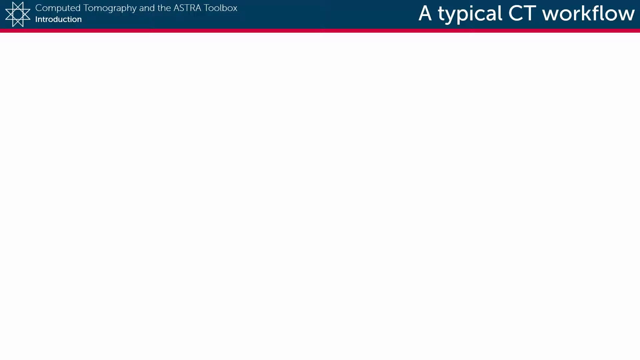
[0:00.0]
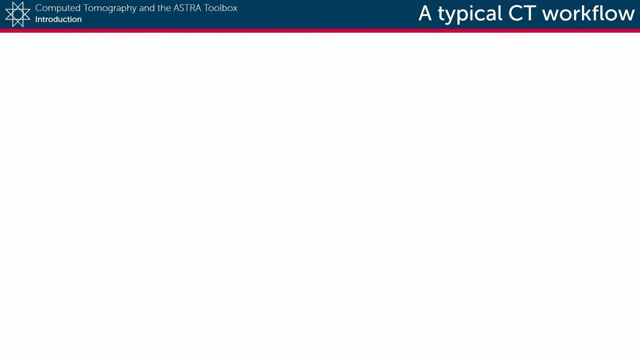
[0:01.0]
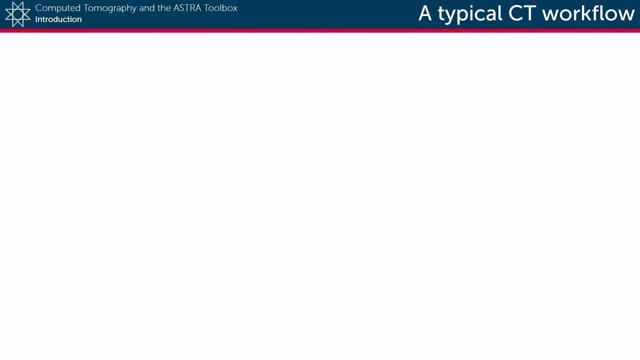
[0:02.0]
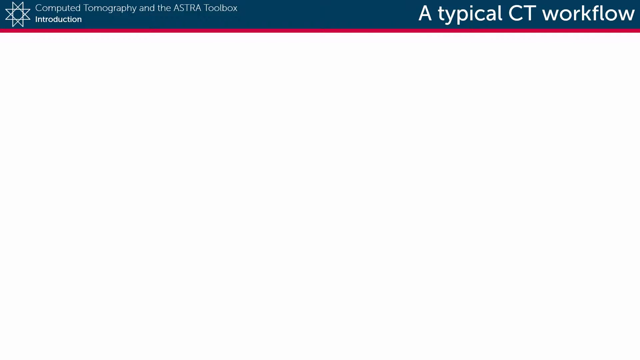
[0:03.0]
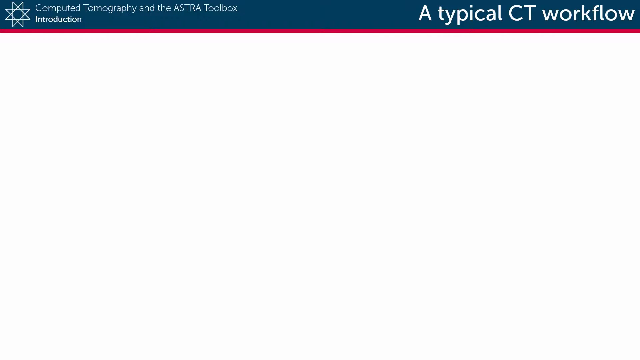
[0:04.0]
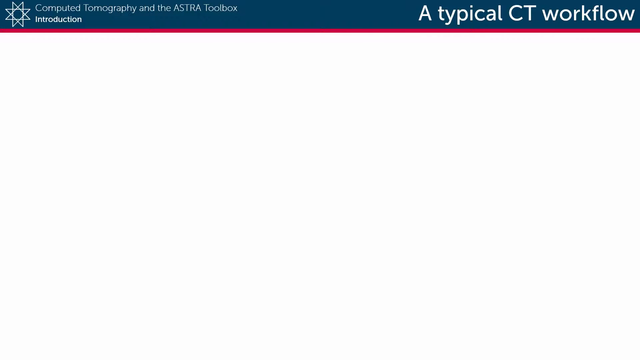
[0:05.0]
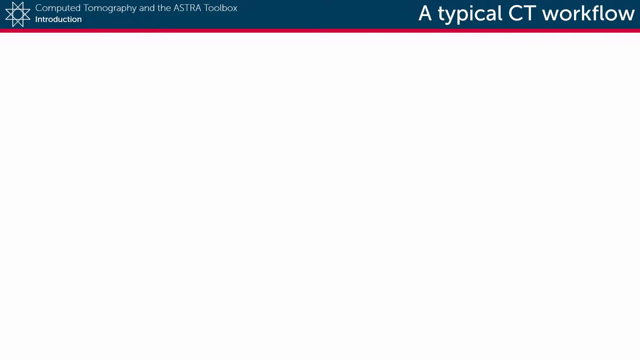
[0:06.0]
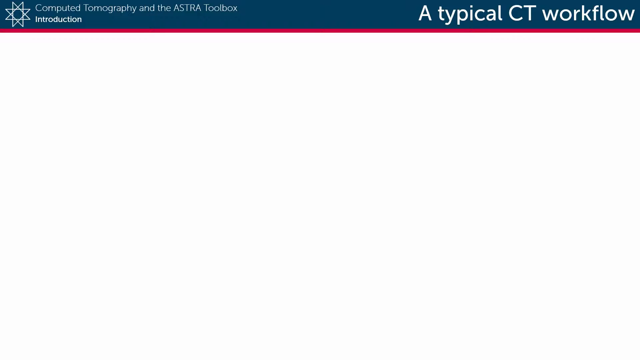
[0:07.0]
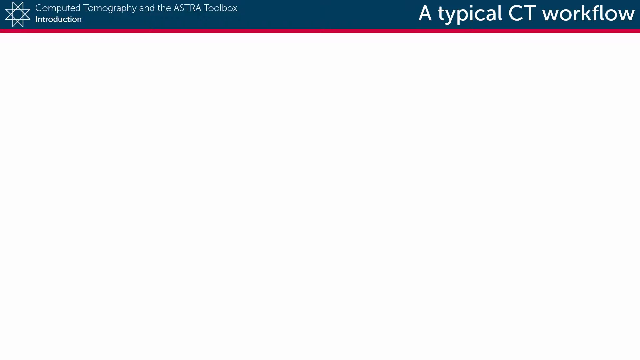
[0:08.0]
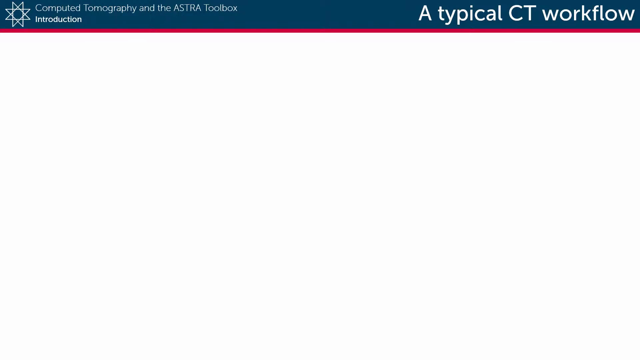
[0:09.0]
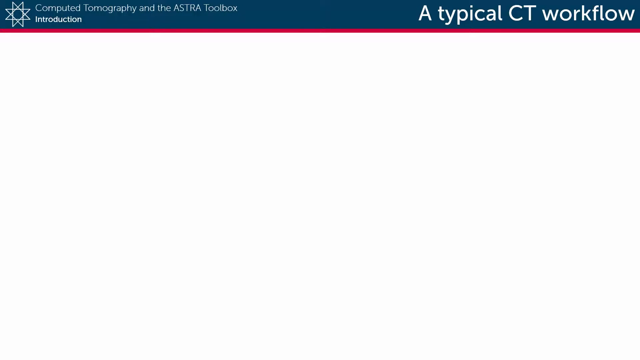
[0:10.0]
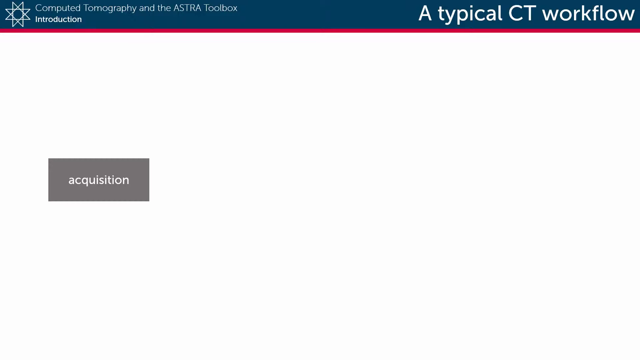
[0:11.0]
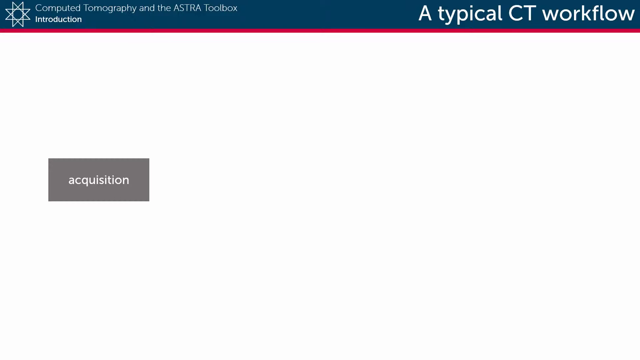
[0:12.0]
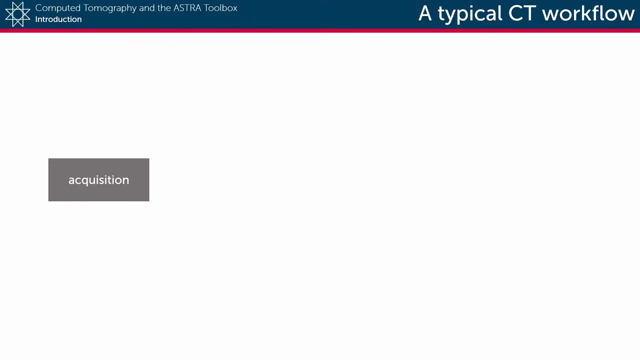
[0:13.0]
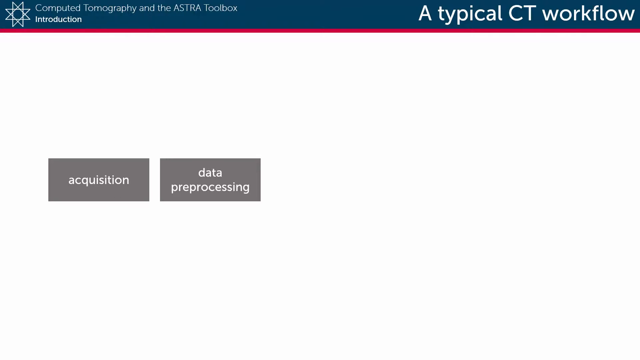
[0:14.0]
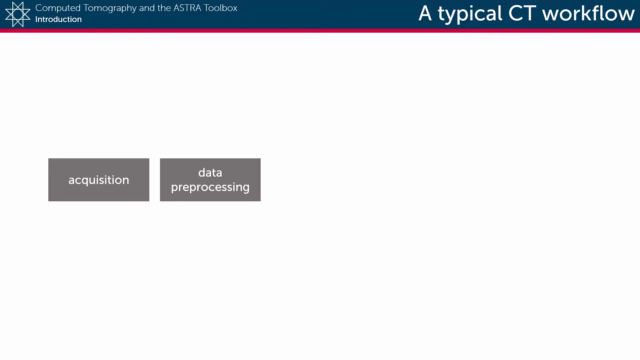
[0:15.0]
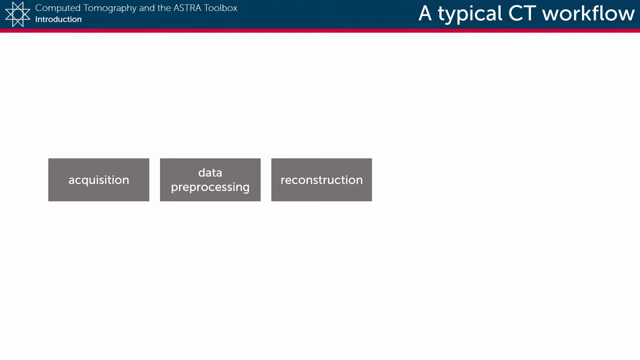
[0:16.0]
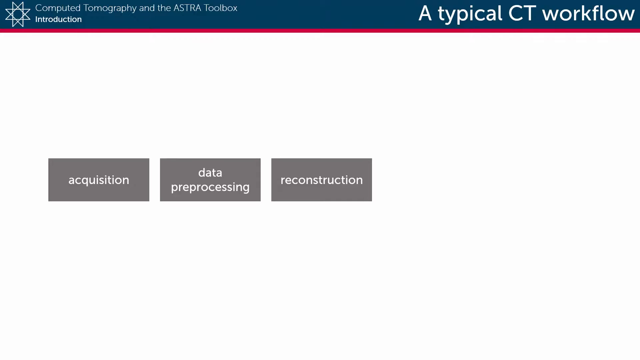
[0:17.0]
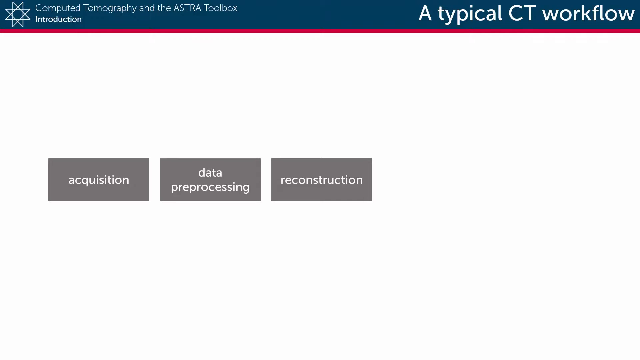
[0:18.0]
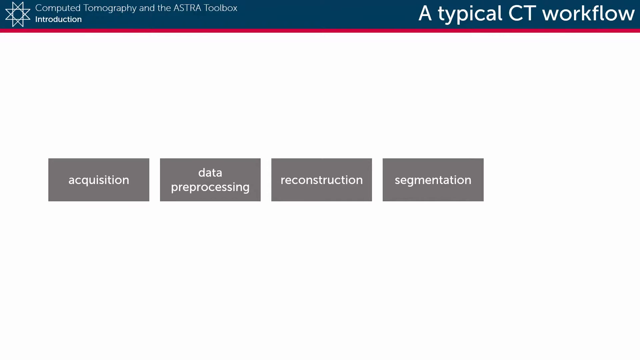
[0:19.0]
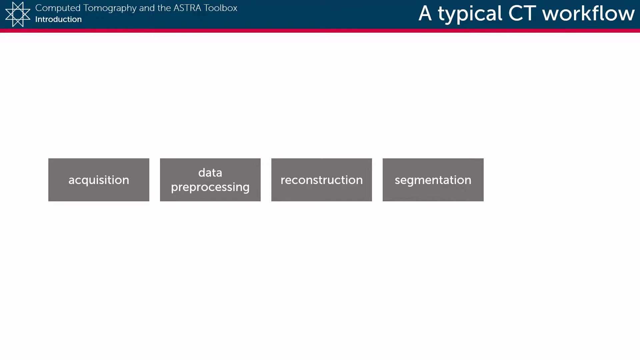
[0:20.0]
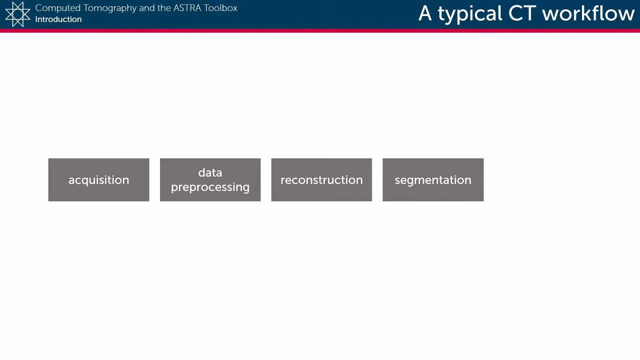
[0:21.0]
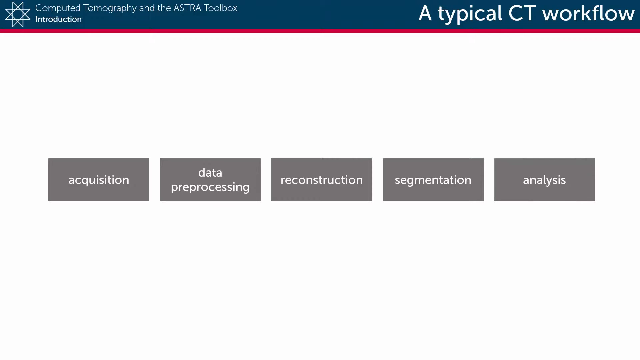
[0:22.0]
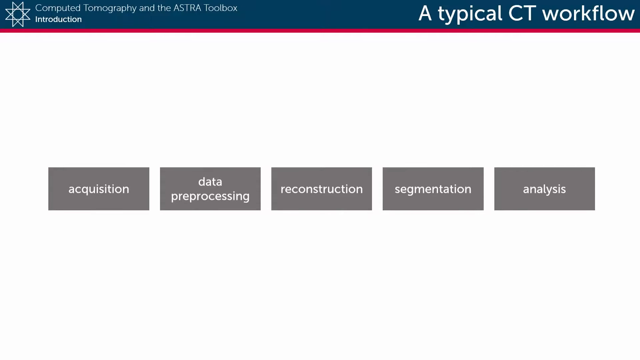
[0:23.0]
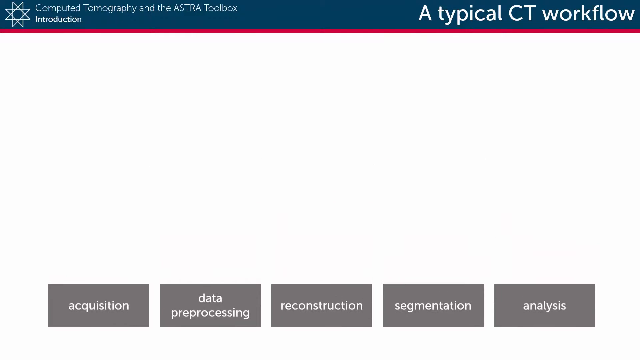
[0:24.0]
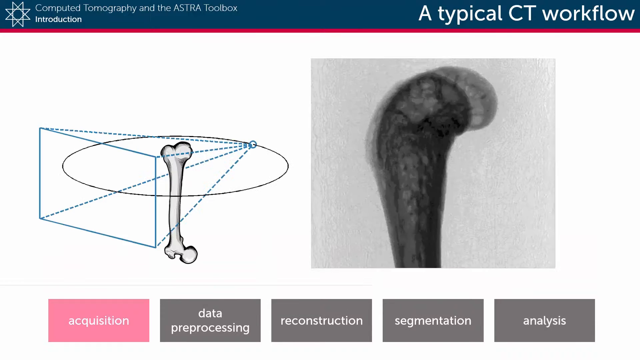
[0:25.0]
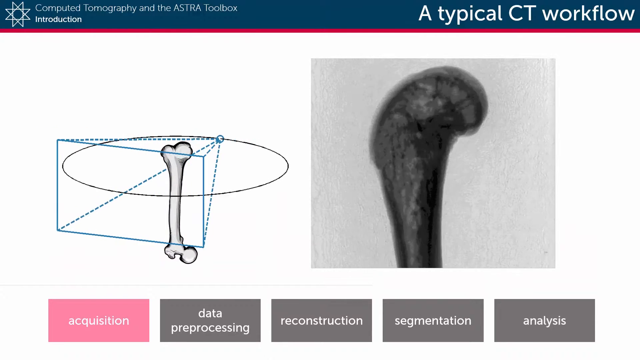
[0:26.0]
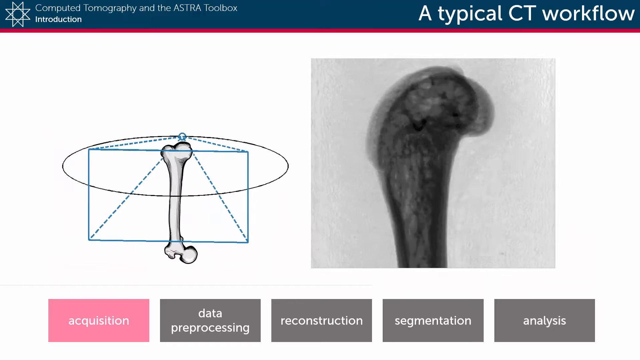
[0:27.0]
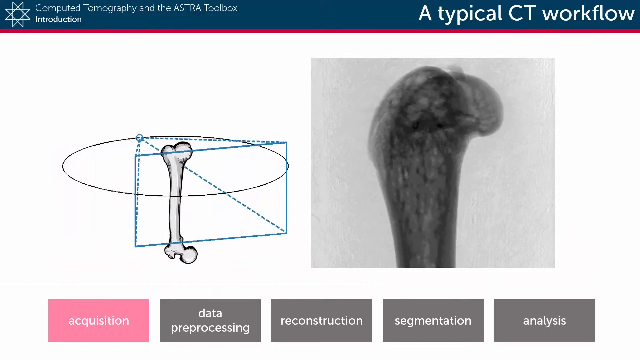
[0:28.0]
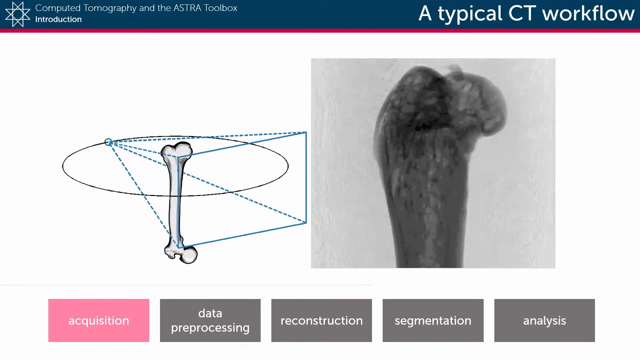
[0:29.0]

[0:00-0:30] A blue border runs across the top of the screen. In the top left is a star-like shape with two points on top, two to the right, two at the bottom and two to the left, and a circle in the middle. To the right of it the text reads "computed tomography and astro toolbox introduction," and on the right side it says "a typical CT workflow." Below that is a thin red border, and below that the screen is white. On the left side, in the middle, a gray rectangle pops up that says "acquisition" in white. Another gray box with white writing pops up to its right saying "data preprocessing," then another to the right saying "reconstruction," and another on the right side saying "segmentation and analysis." The boxes drop down to the bottom of the screen, and the one on the right or left turns from gray to red. Above it is a drawing of a bone that looks like maybe a femur or a tibula. A circle goes around the top of it, across to the left, crosses the bone in the center and then back over the top. To the right is a small circle with four dotted lines coming off it, spreading out to form a square at the bottom so it almost looks like a triangle lying down. On the right side is a close picture of the top of a bone that would go into a joint, apparently a kind of X-ray. The drawing rotates from the right toward the left, and as it rotates the image on the right side also rotates, continuing to the left.